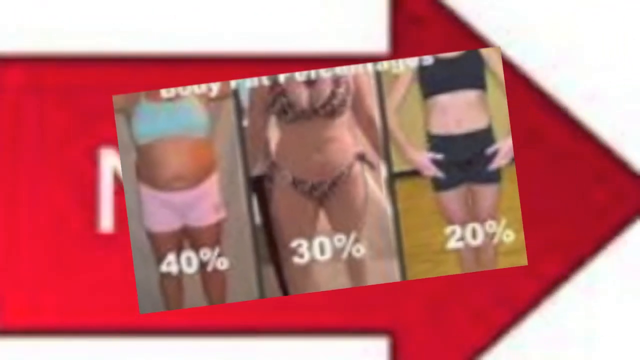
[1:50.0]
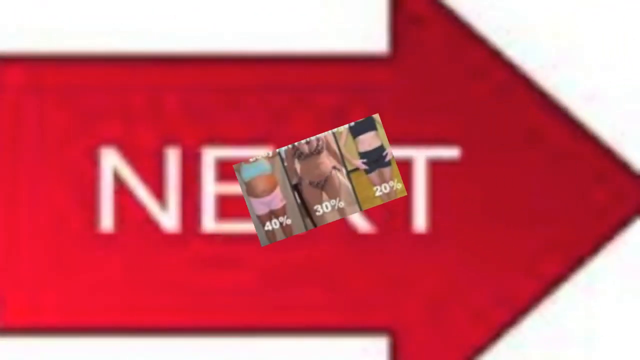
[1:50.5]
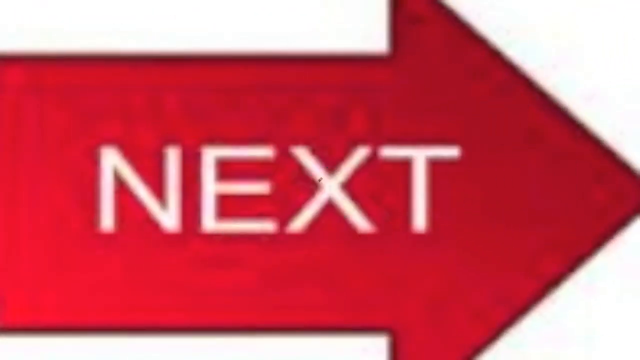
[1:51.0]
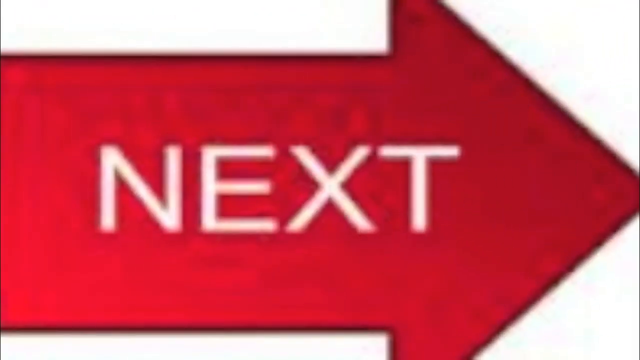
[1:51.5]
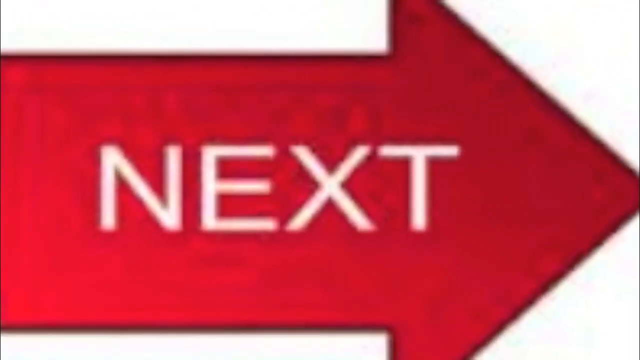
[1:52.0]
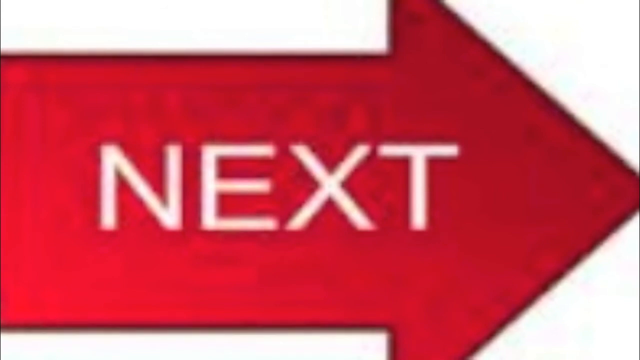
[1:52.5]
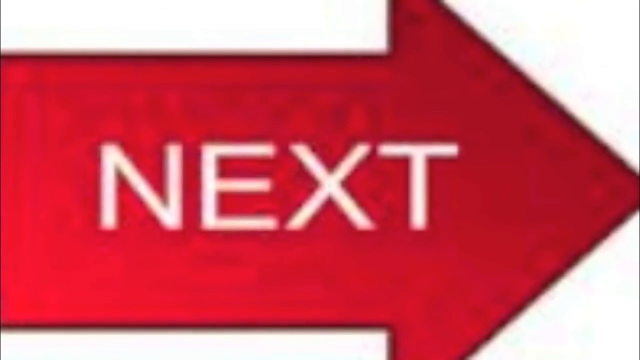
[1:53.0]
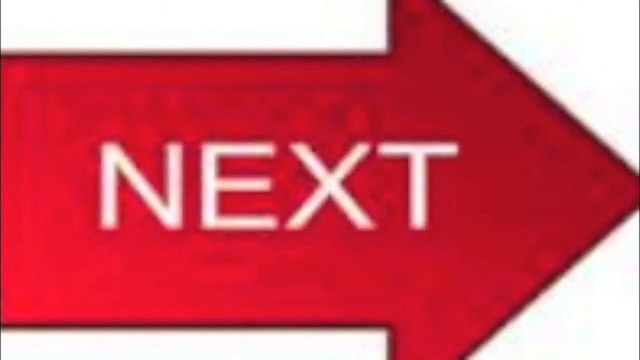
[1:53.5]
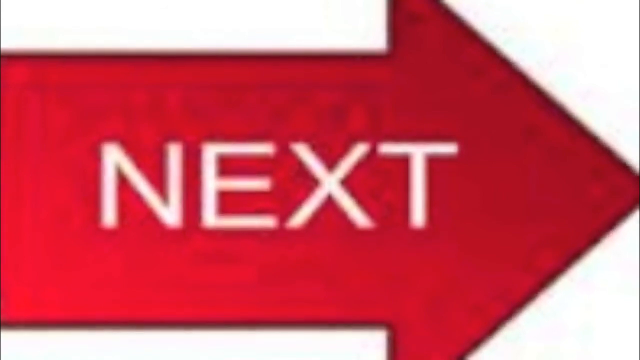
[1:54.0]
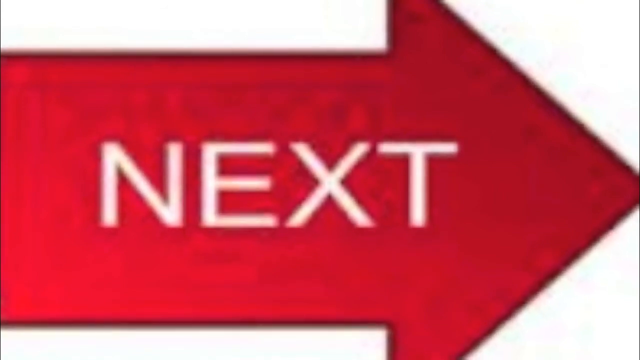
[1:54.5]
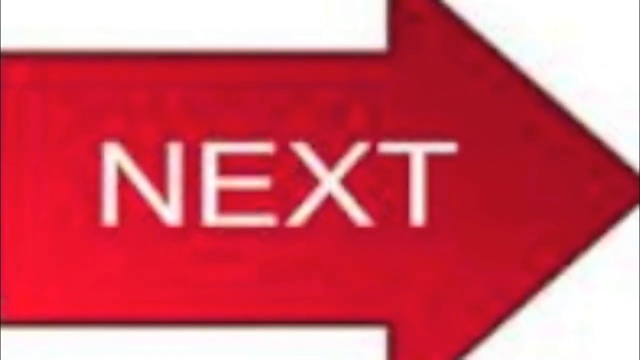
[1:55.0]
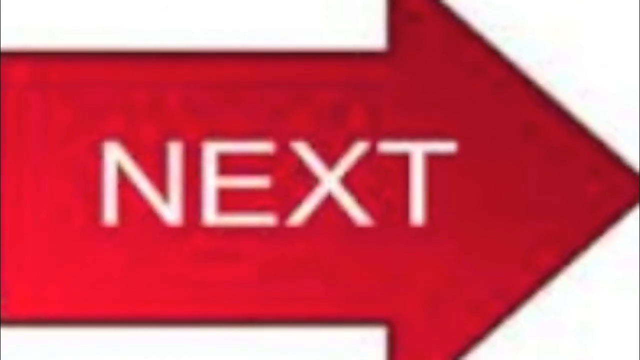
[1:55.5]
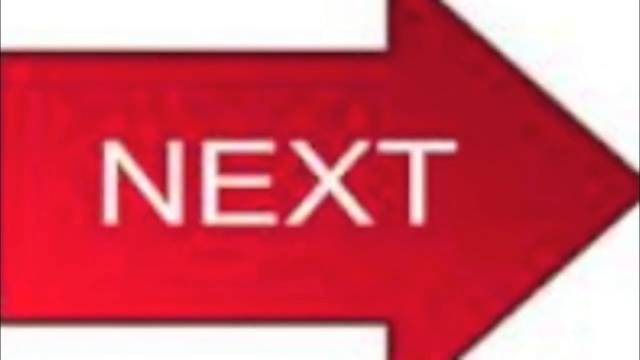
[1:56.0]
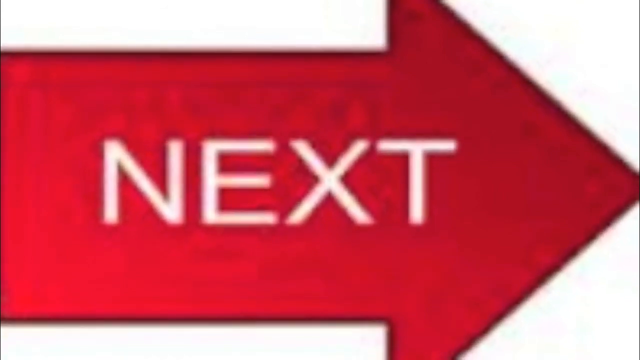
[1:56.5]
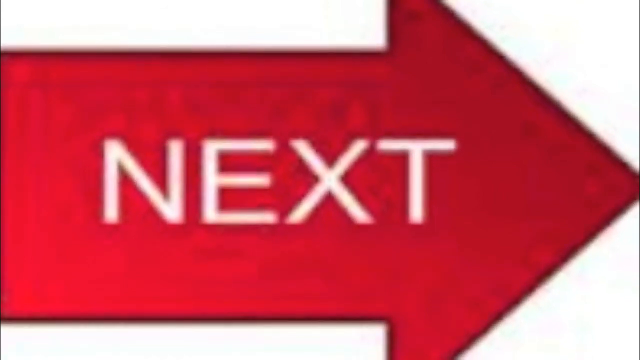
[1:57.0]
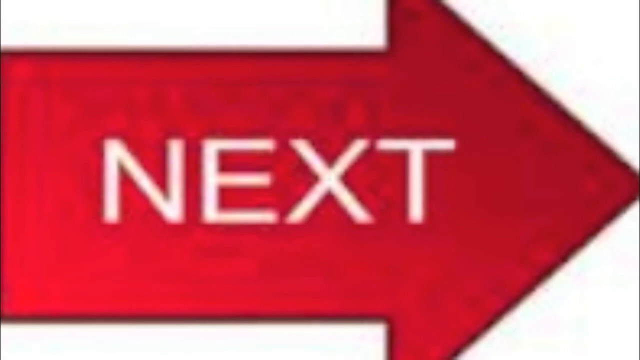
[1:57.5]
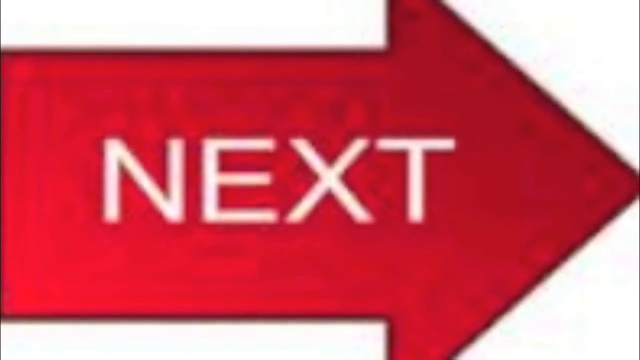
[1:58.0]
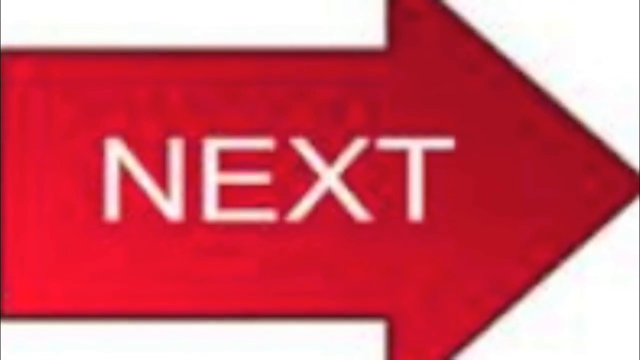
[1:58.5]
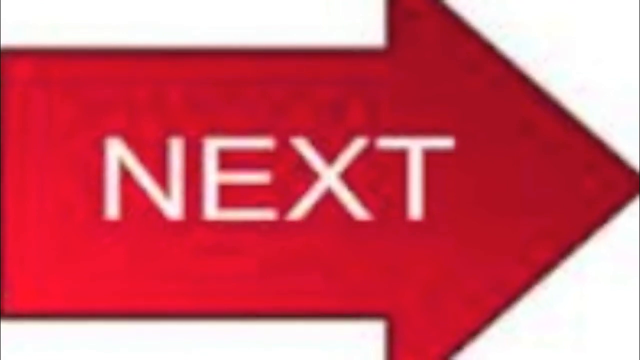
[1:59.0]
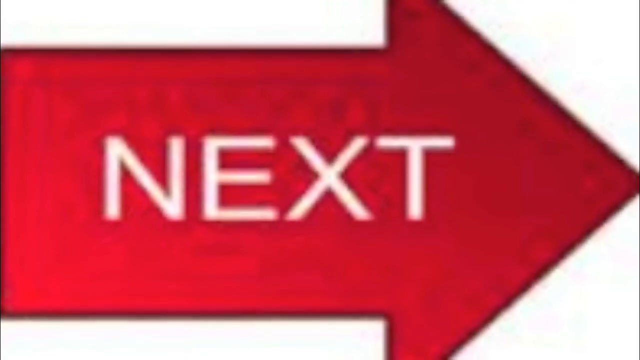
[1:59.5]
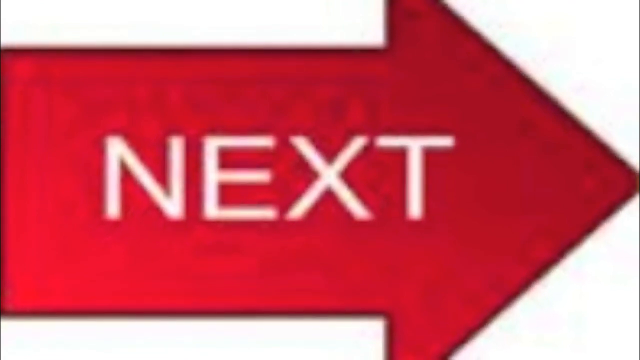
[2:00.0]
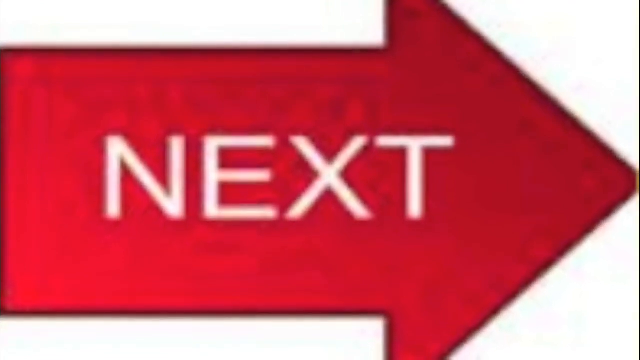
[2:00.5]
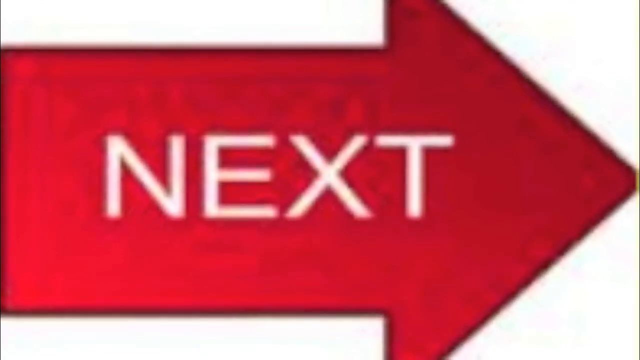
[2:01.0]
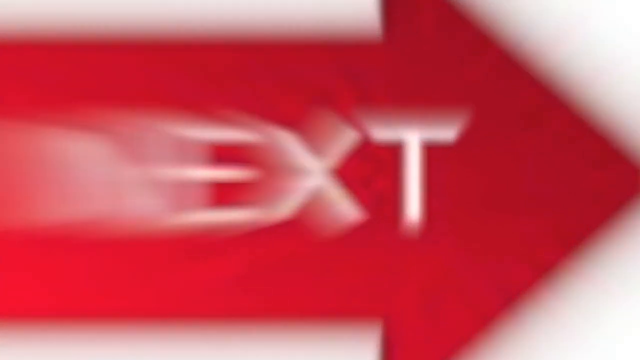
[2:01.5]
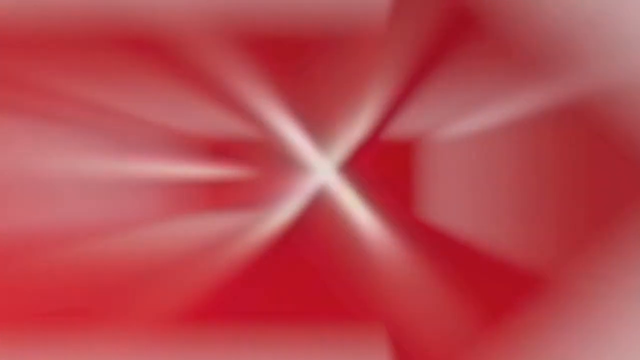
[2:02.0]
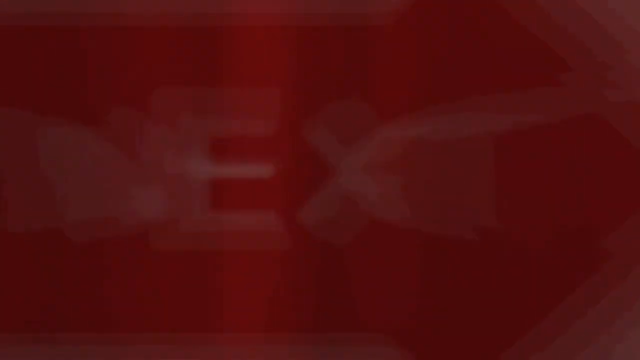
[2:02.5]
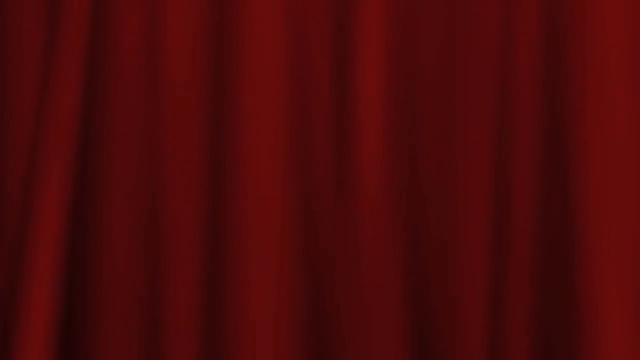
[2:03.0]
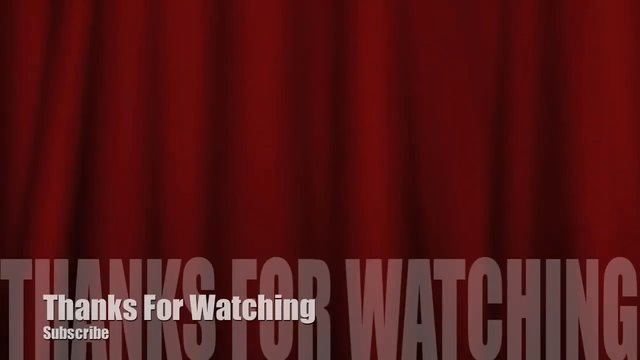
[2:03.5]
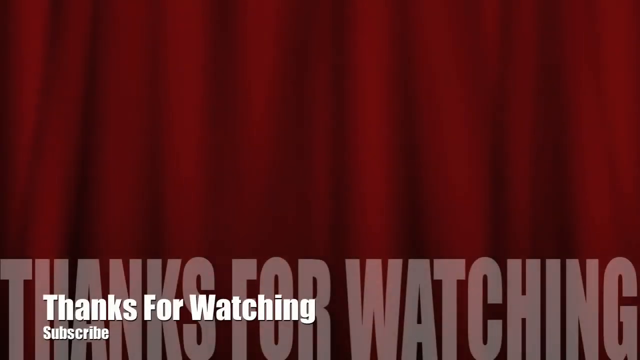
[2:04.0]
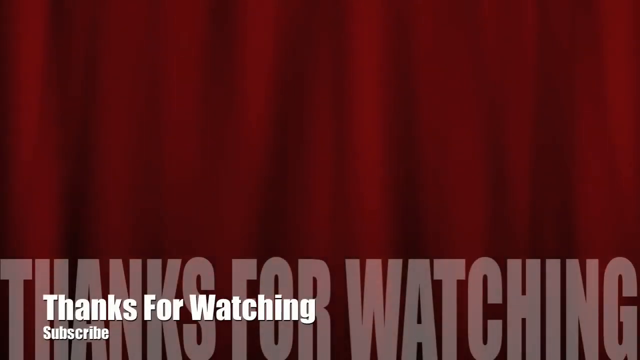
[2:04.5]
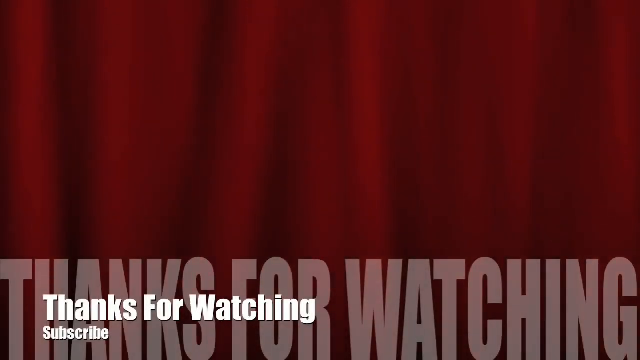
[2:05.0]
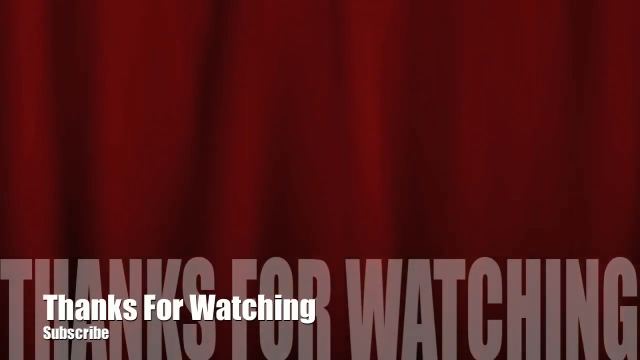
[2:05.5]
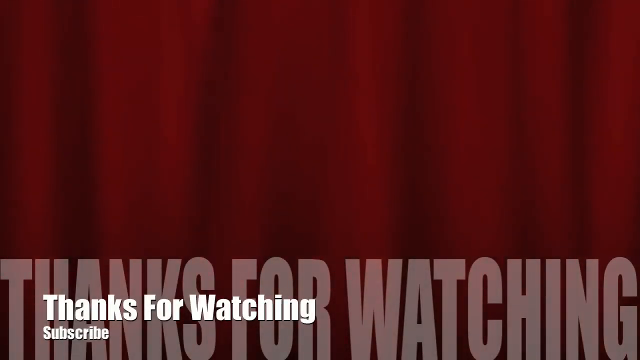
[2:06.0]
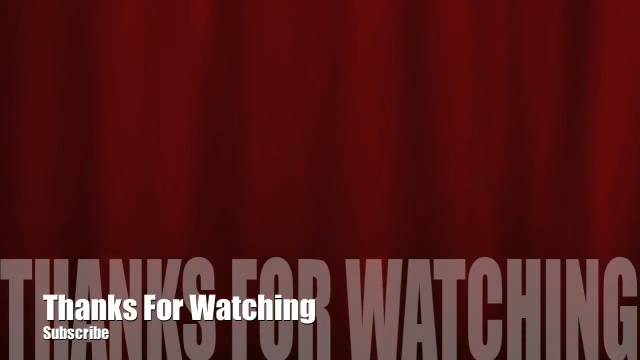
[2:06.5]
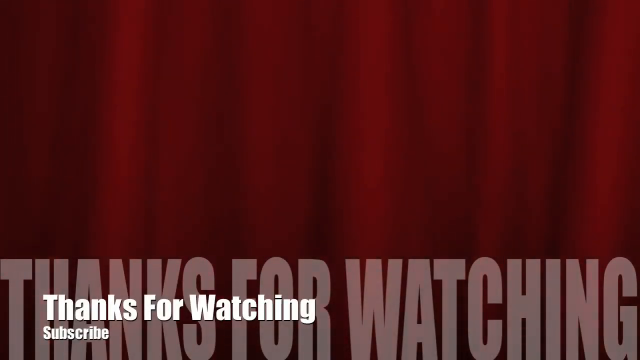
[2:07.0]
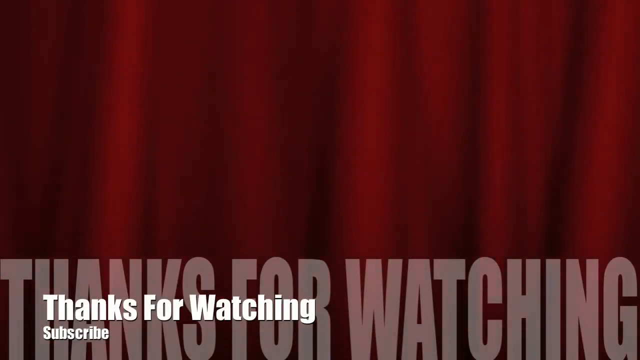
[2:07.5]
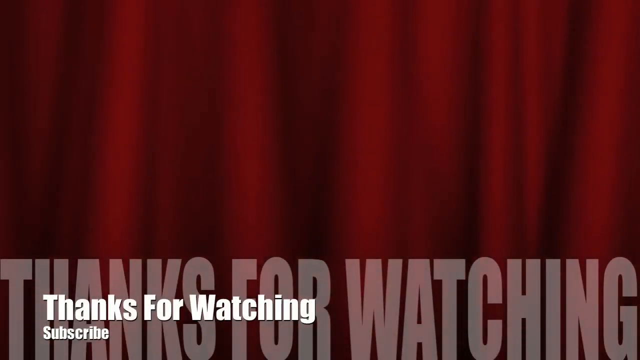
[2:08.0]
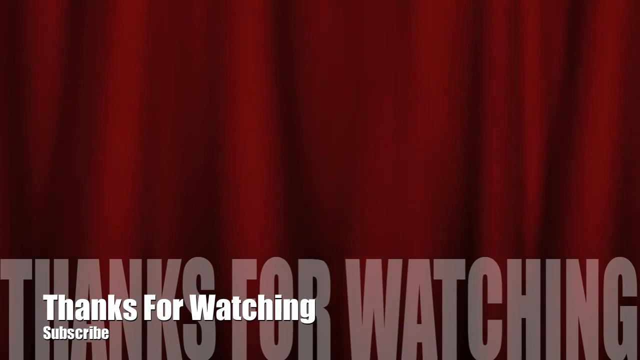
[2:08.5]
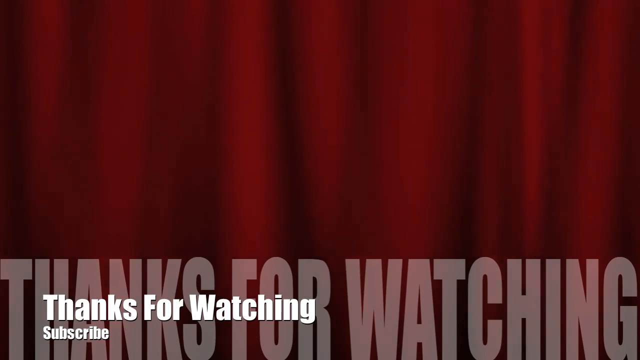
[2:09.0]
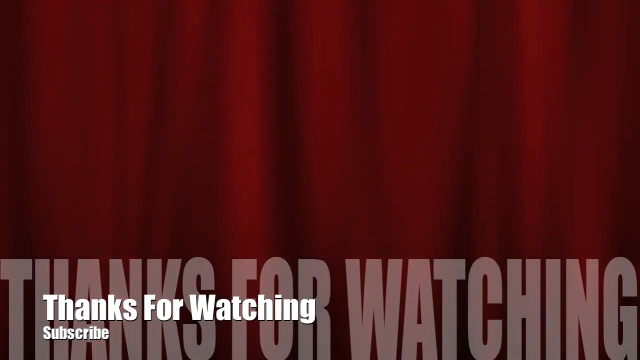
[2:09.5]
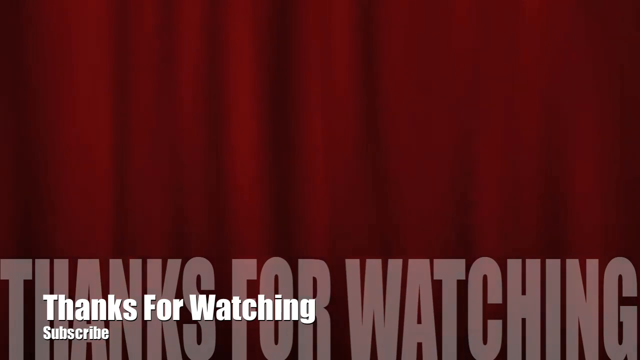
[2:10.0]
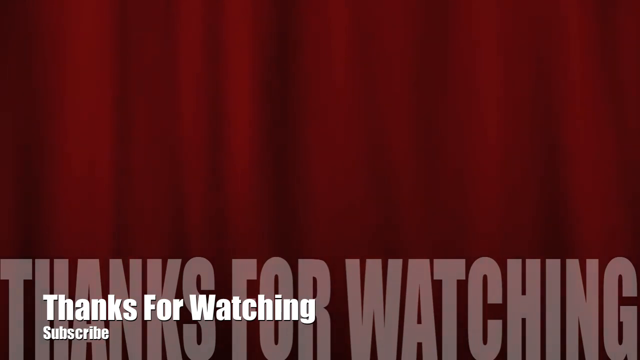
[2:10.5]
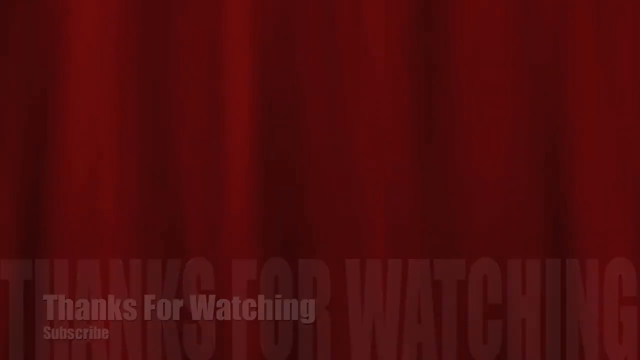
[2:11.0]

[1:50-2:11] The photo of the three women and their body fat percentages disappears, replaced by a screen with a red arrow pointing to the right bearing the word "NEXT" in white, all-caps sans serif. It stays on screen for a few seconds, then blurs out and transitions into a screen that looks like a red theater curtain. At the bottom of the screen, "THANKS FOR WATCHING" appears in white, bold, condensed all caps, overlaid with a smaller version of the same words in upper and lower case, which has a slight drop shadow. The curtain behind moves a little, showing it is not a still image.